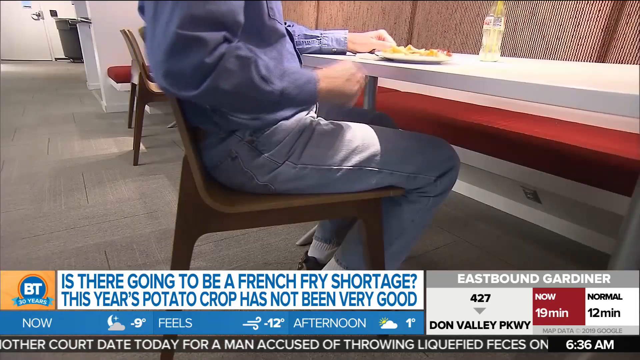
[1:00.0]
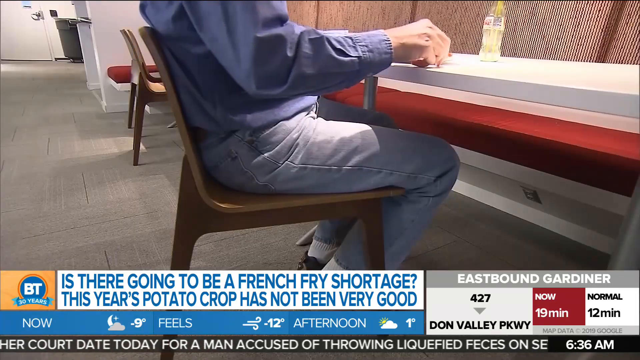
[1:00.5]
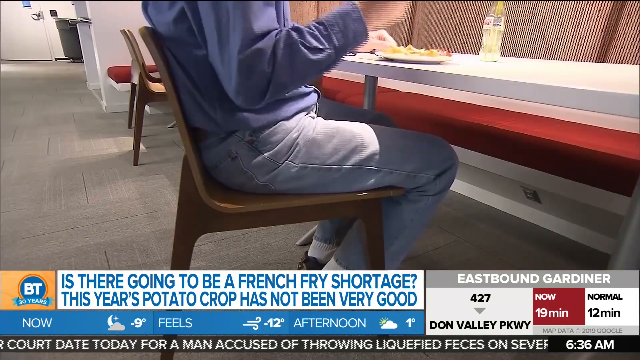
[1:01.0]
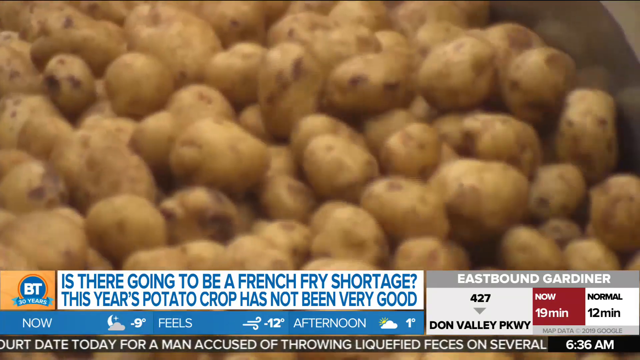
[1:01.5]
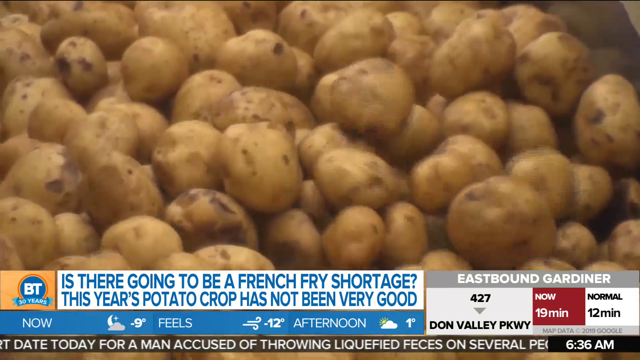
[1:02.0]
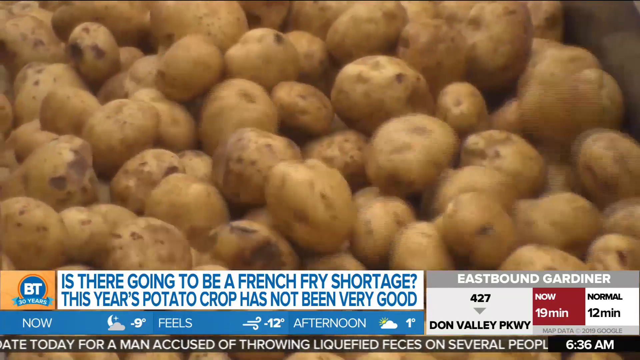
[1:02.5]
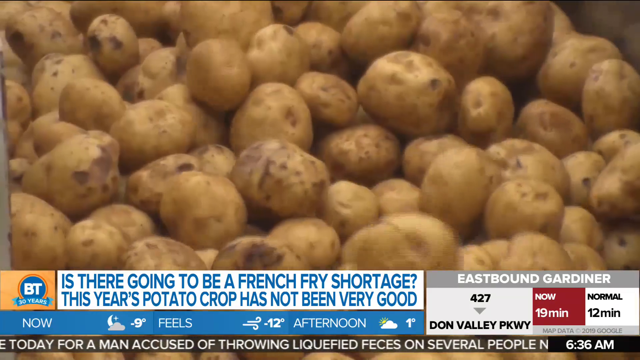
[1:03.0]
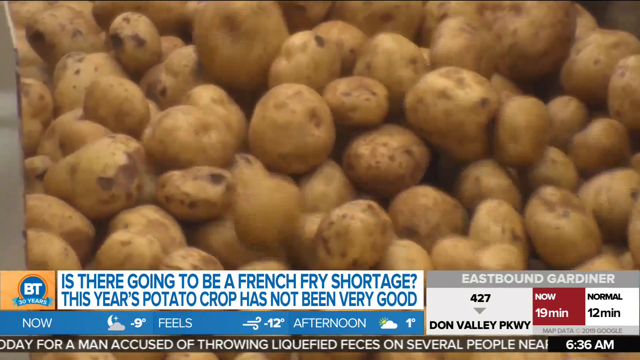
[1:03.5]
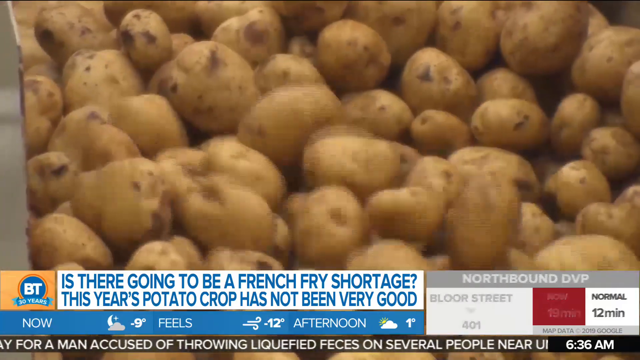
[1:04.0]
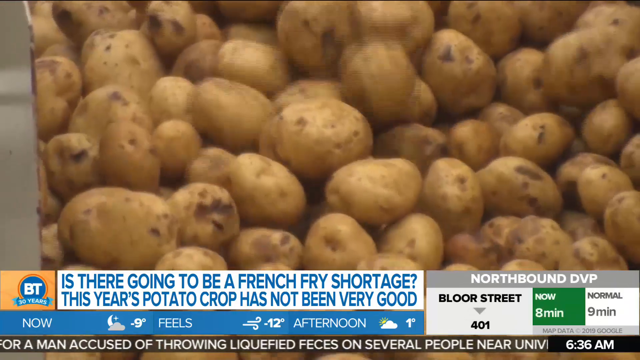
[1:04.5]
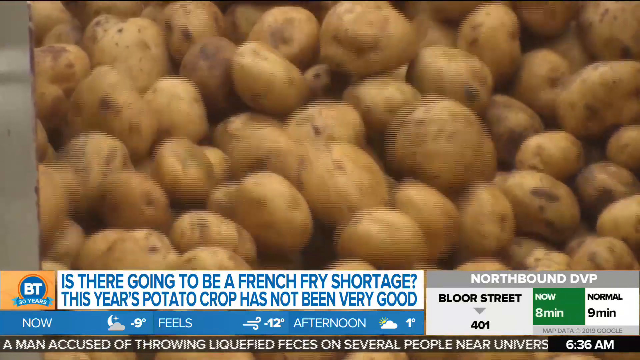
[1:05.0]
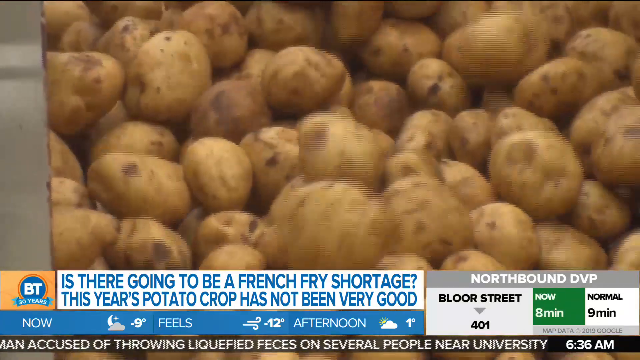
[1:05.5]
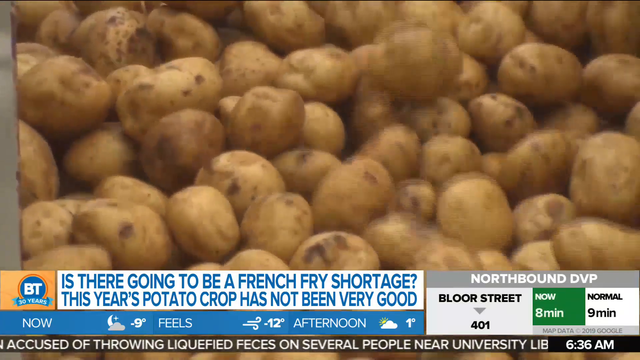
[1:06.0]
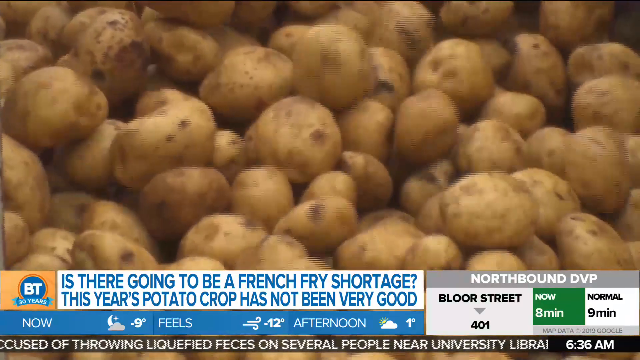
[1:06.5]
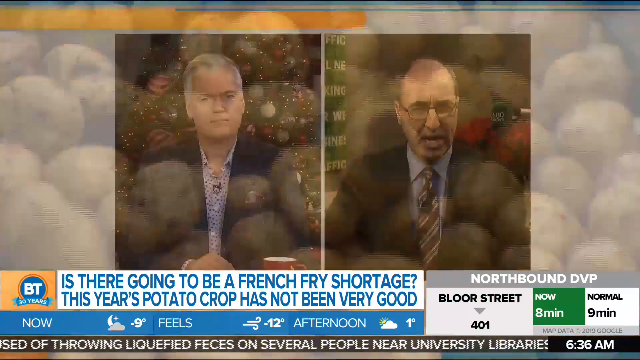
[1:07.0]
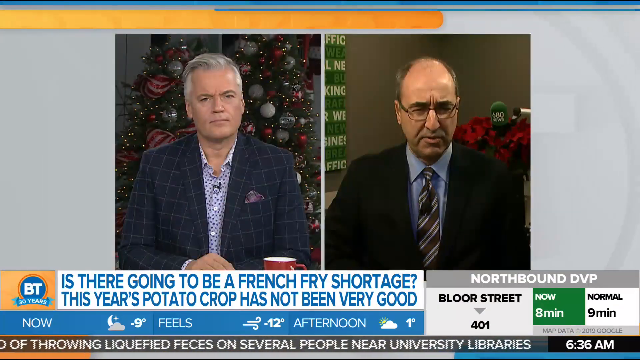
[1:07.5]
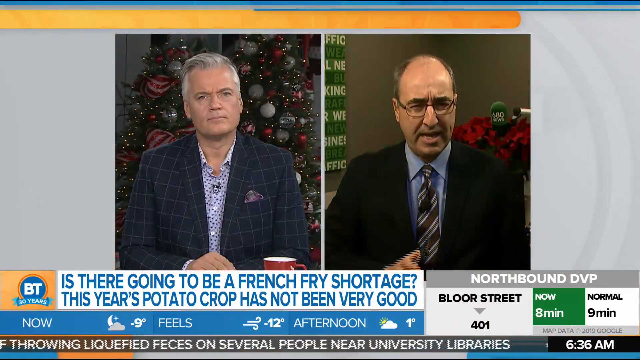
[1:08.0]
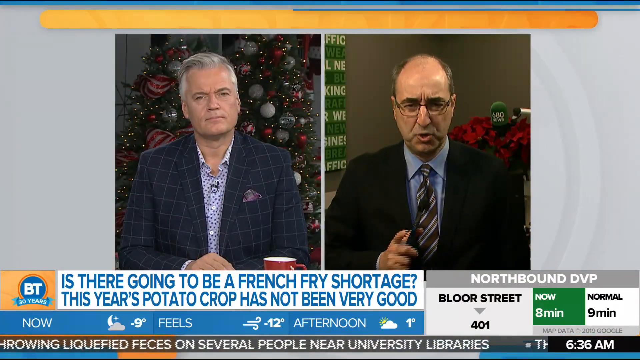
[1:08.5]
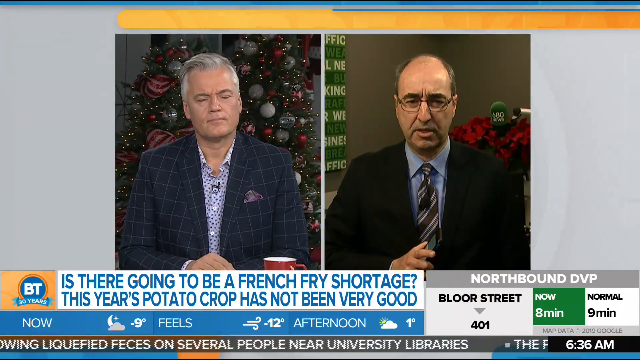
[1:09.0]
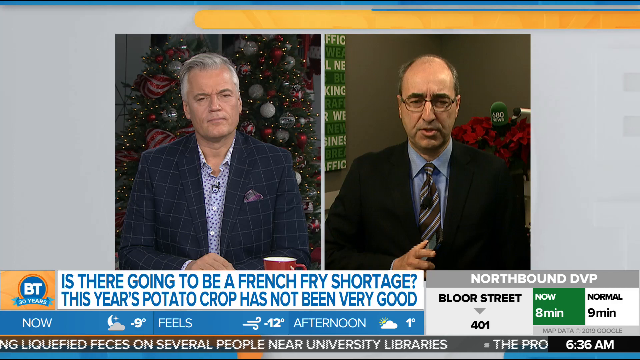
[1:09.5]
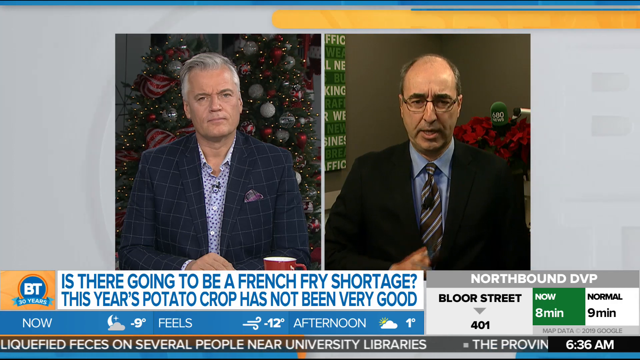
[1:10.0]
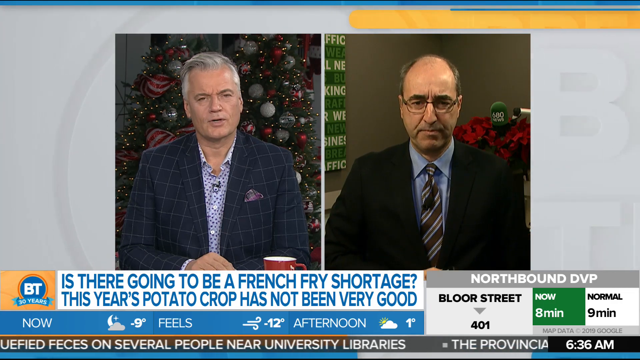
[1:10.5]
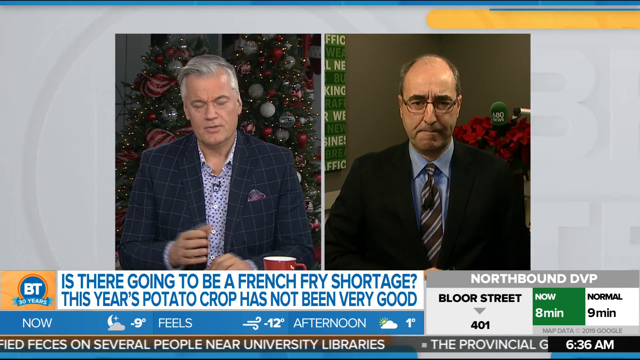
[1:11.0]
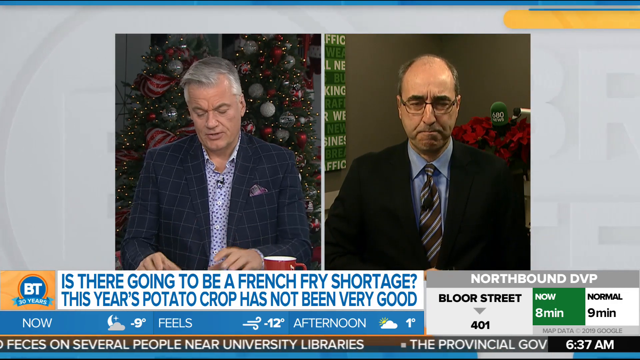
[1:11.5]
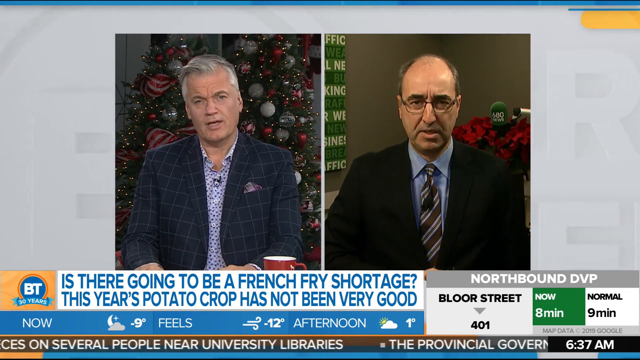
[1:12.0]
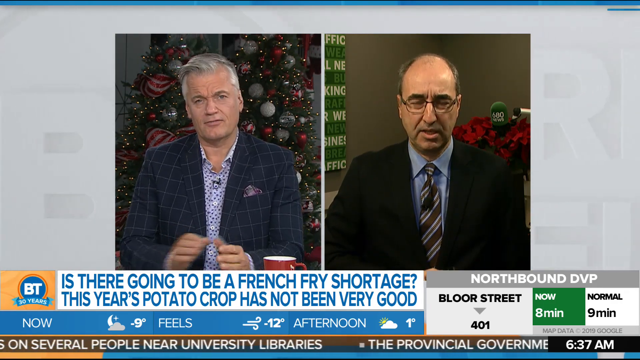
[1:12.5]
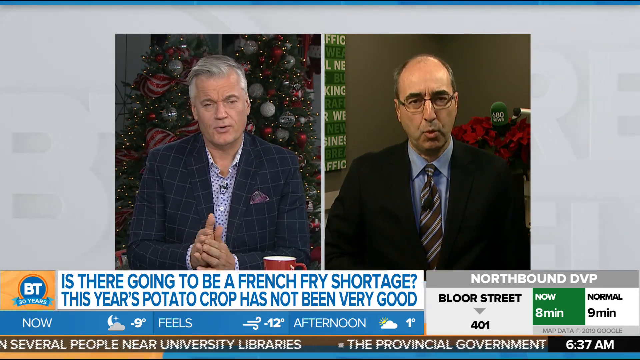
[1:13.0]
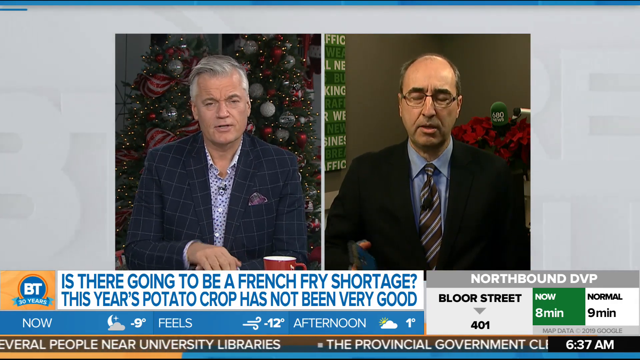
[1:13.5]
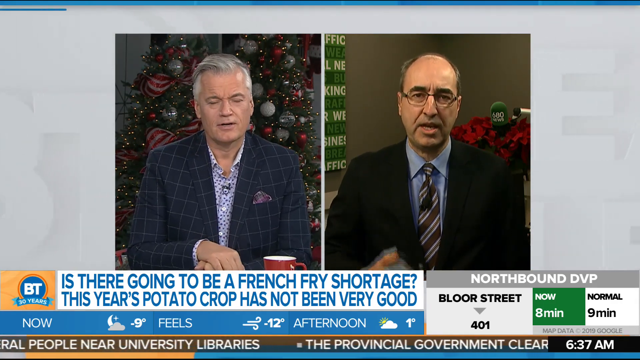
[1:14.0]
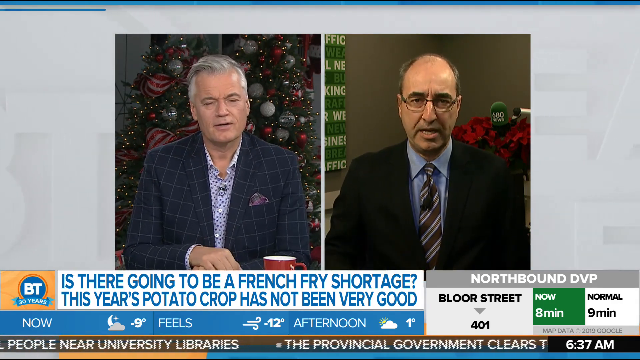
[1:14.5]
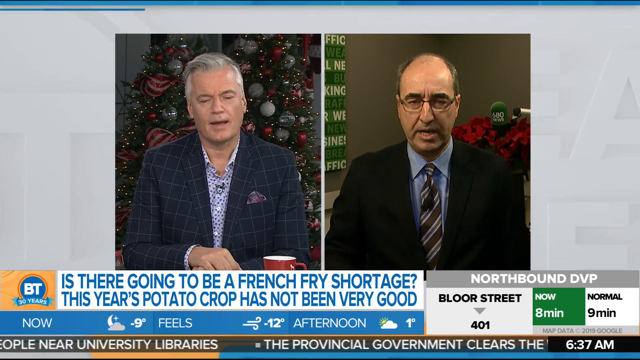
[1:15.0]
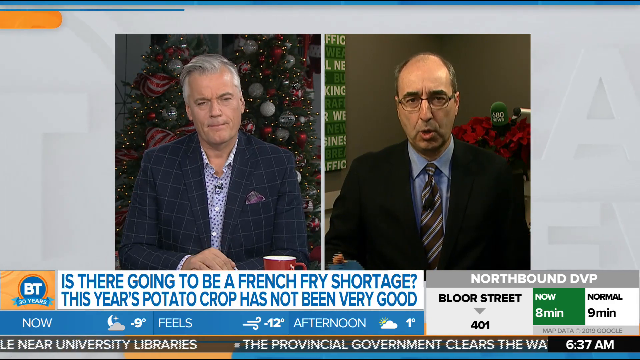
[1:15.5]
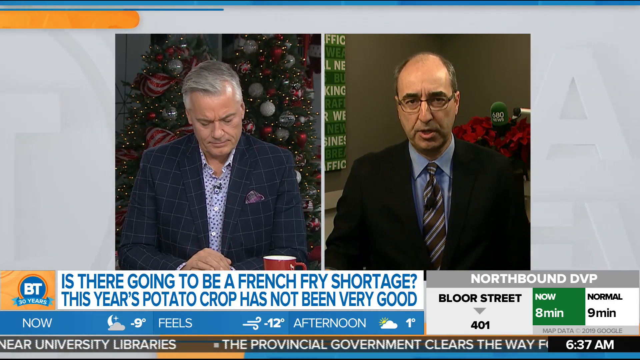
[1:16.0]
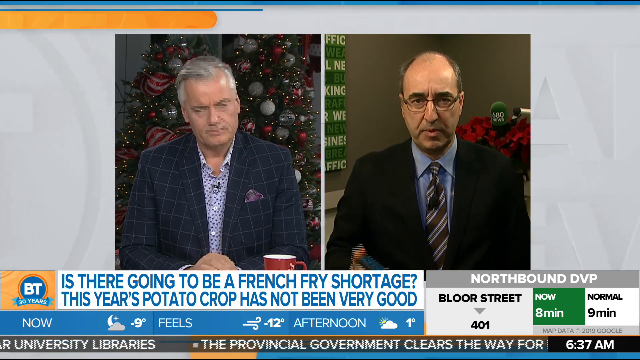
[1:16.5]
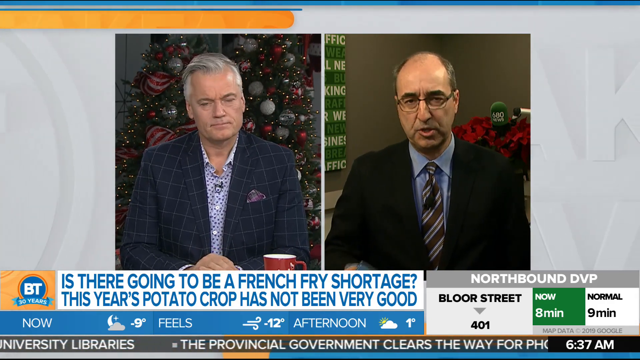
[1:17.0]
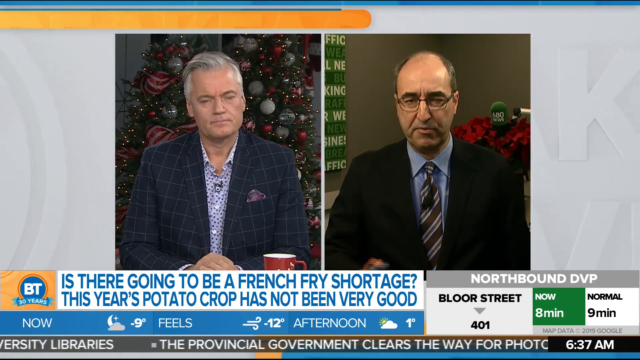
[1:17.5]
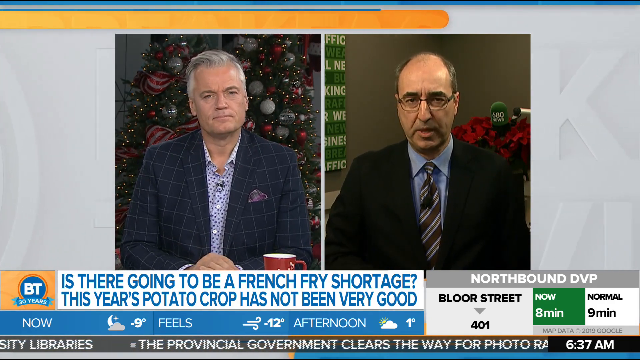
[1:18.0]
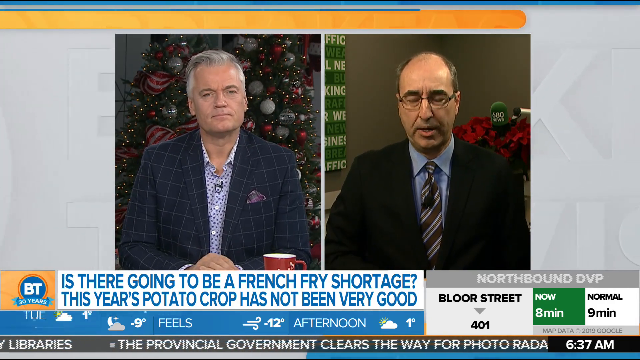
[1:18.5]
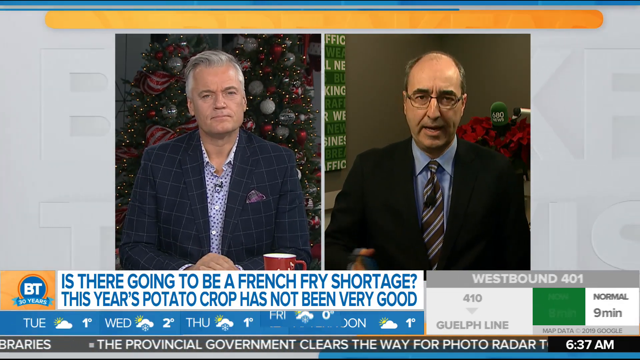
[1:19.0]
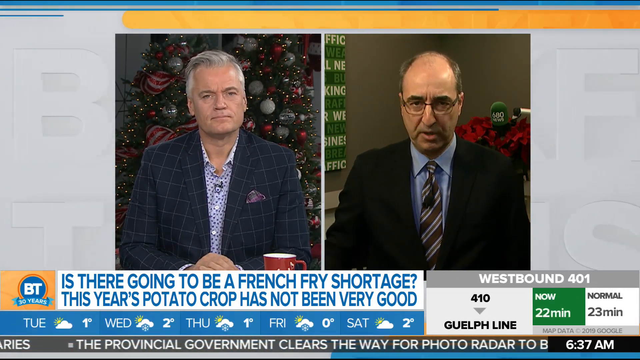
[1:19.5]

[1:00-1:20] A news segment shows the BT emblem in the bottom left: "BT" in white in a blue circle with a red outline, and a banner below reading "30 years." To the right, a white rectangle reads "Is there going to be a french fry shortage? This year's potato crop has not been very good." Weather information is at the bottom of the screen, and on the right side a white box shows traffic information for eastbound Gardiner. In the video above, a man sitting in a restaurant wears light gray jeans and a long-sleeve black shirt; he eats from a plate of fries, taking one with his right hand and putting it in his mouth. His face is not visible. The video cuts to a group of potatoes in a manufacturing plant, sliding and rolling downwards. The video returns to the news studio, where a split screen on a gray background shows two newscasters. The newscaster on the right wears a black suit, a blue shirt, a striped gray and white tie, and black glasses, and he is balding. The man on the left has gray hair combed to the right on top of his head, a black suit with white stripes, and a white button-up shirt with black polka dots. He is sitting in front of a Christmas tree, with his right hand in view resting on the table. As they talk, the man on the left looks down and shuffles his papers with his hands, brings his hands together and slightly rubs them, and then puts his right hand over his left hand, which rests on the table. As the man on the right talks, he rolls his right hand forward into view and then rests it down below the frame; he holds what looks like a smartphone in his right hand, which is visible as he rolls his hand forward.